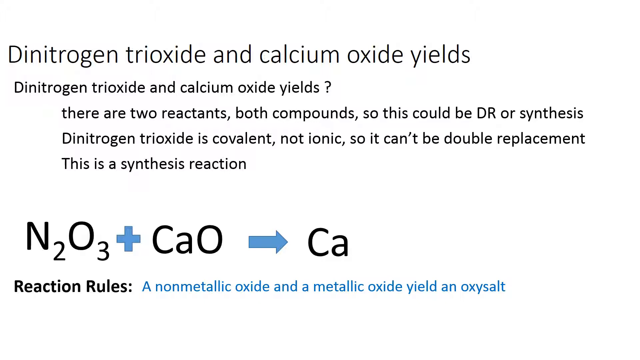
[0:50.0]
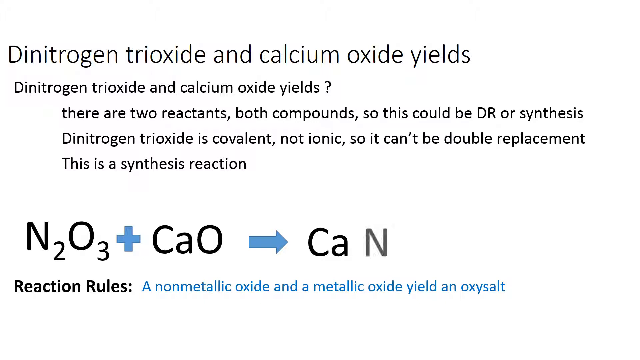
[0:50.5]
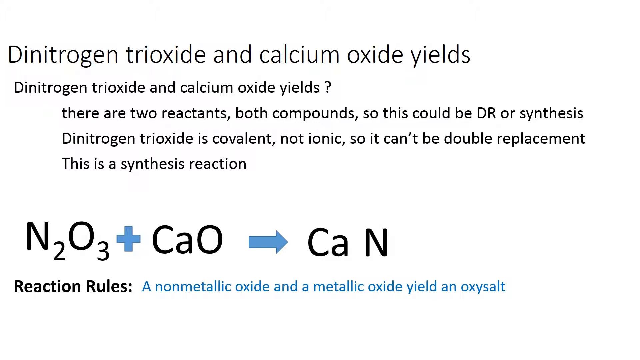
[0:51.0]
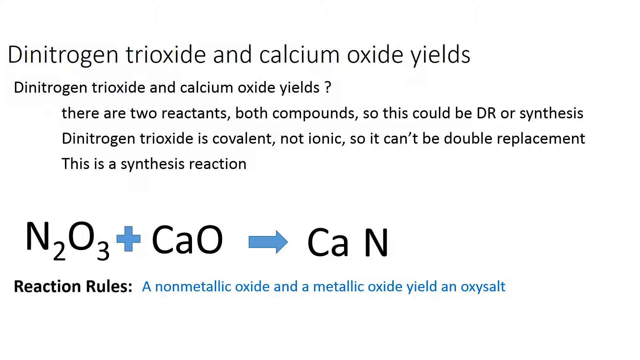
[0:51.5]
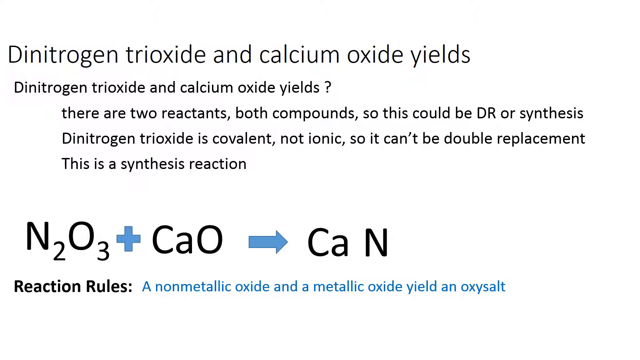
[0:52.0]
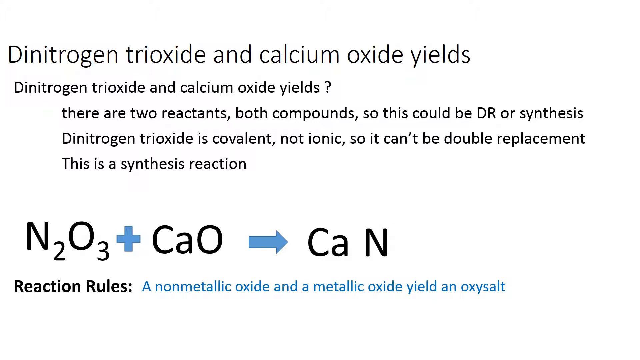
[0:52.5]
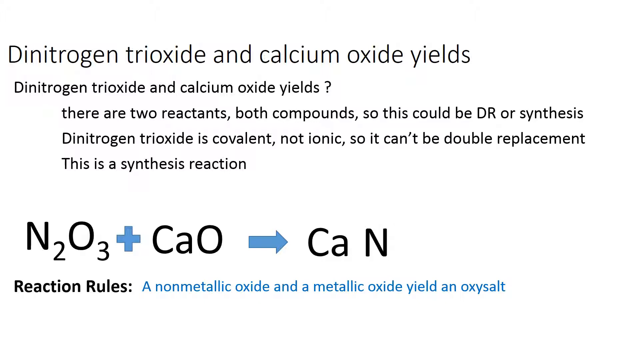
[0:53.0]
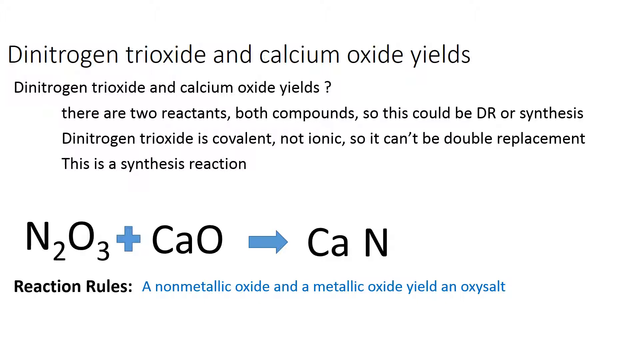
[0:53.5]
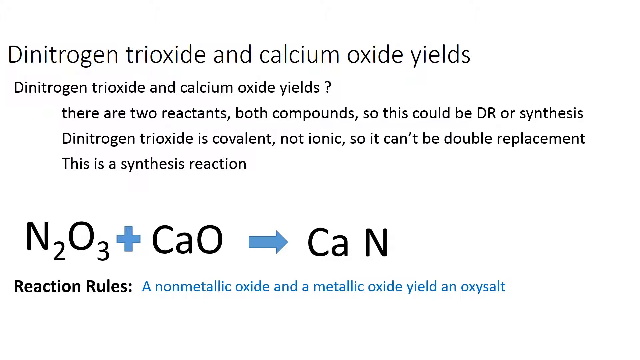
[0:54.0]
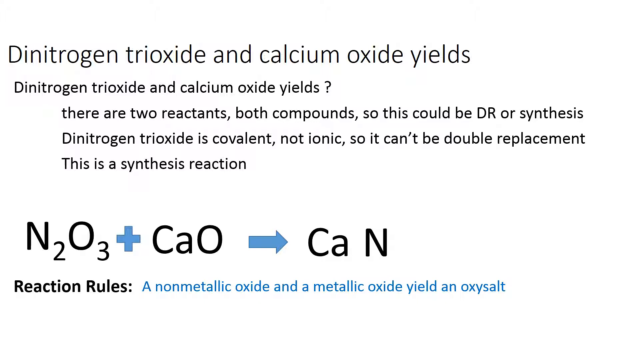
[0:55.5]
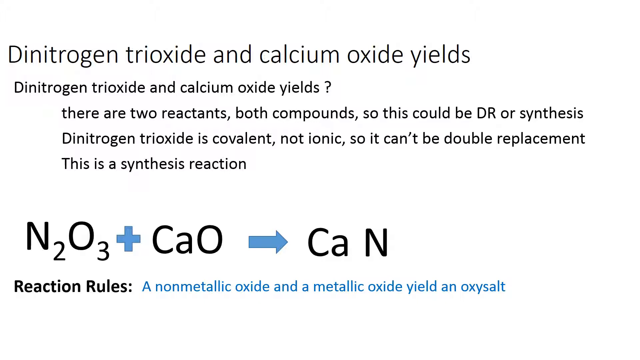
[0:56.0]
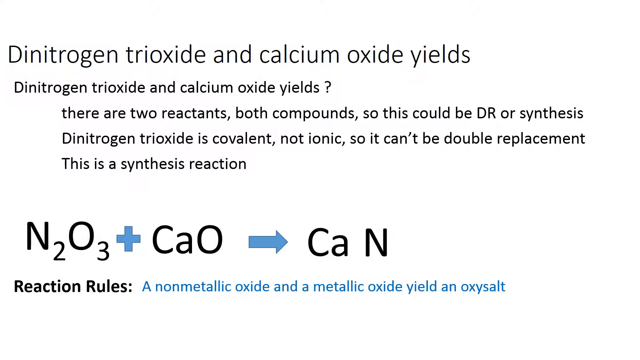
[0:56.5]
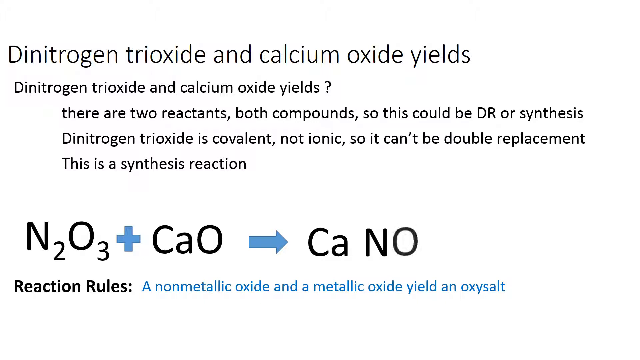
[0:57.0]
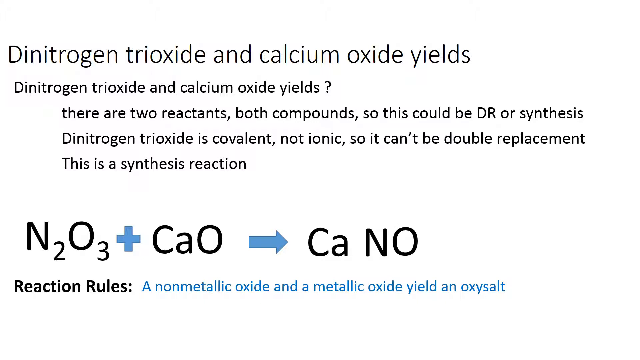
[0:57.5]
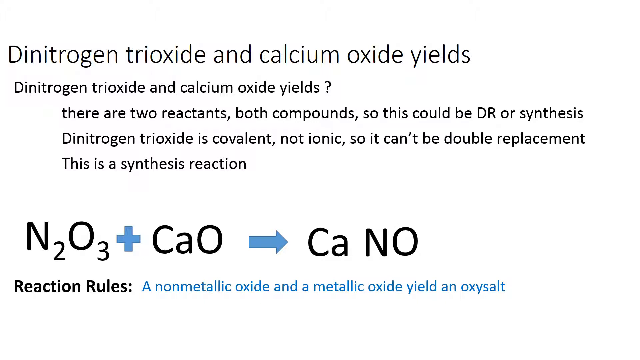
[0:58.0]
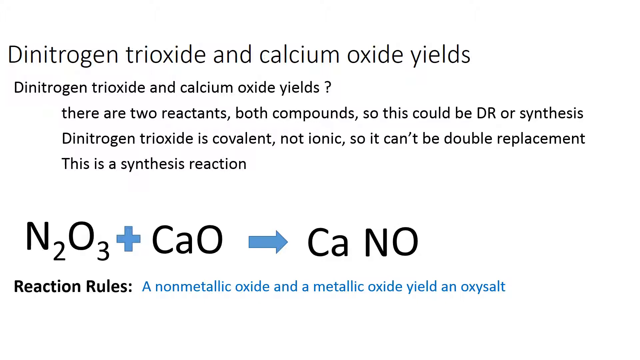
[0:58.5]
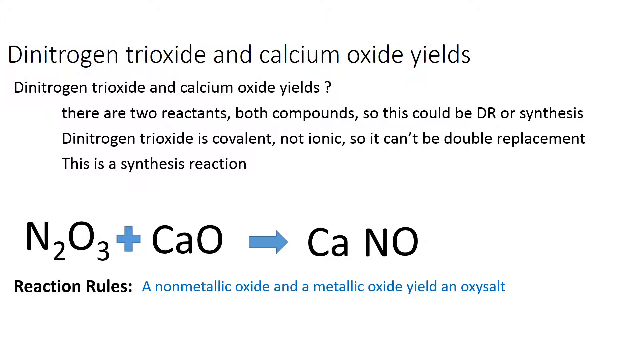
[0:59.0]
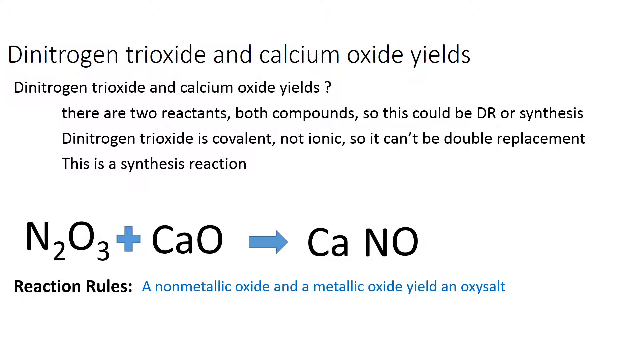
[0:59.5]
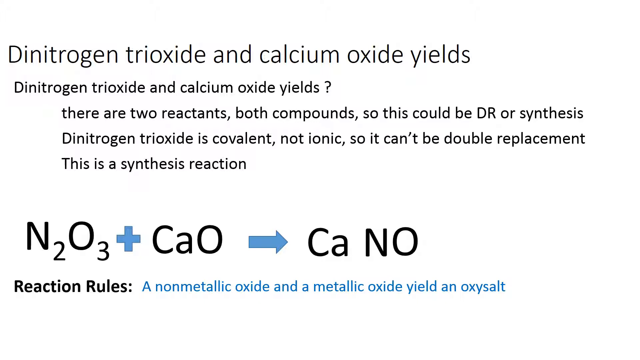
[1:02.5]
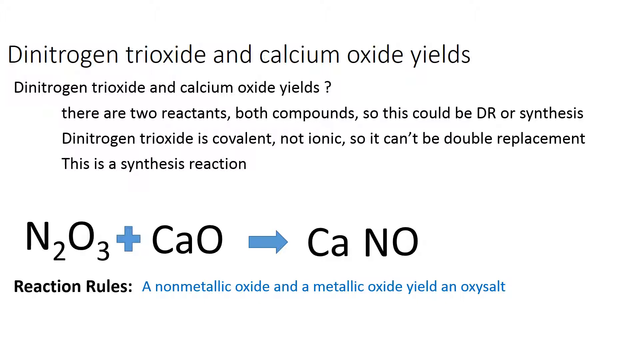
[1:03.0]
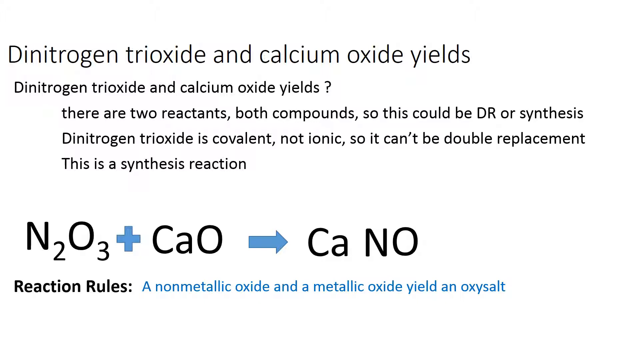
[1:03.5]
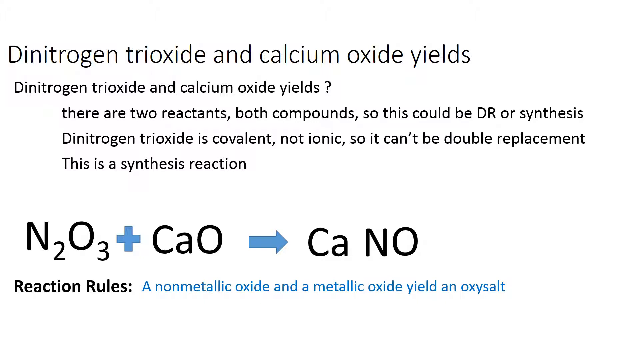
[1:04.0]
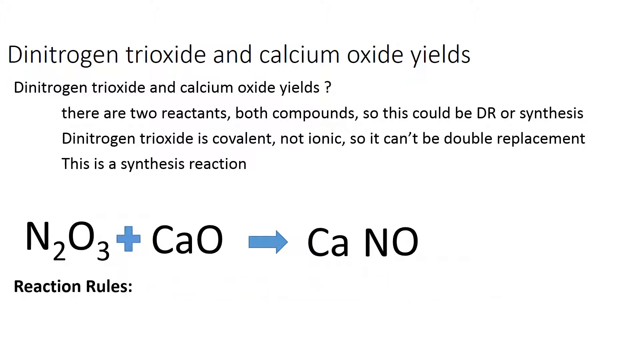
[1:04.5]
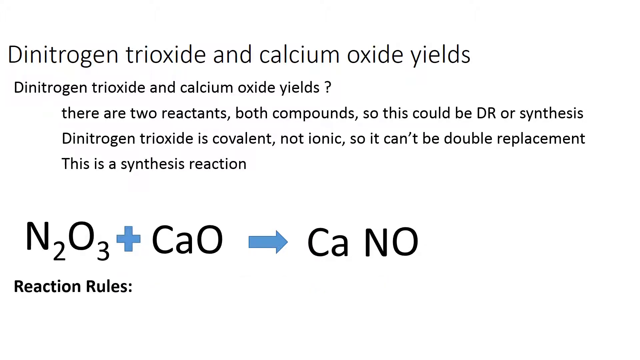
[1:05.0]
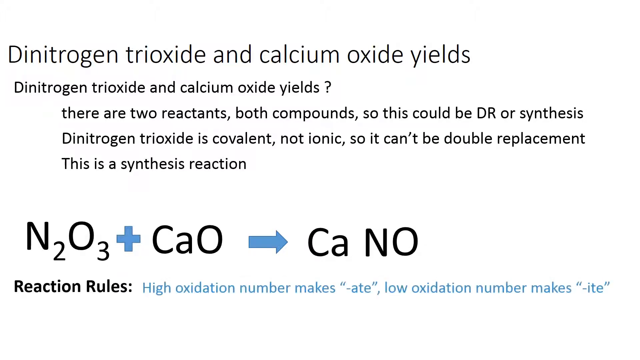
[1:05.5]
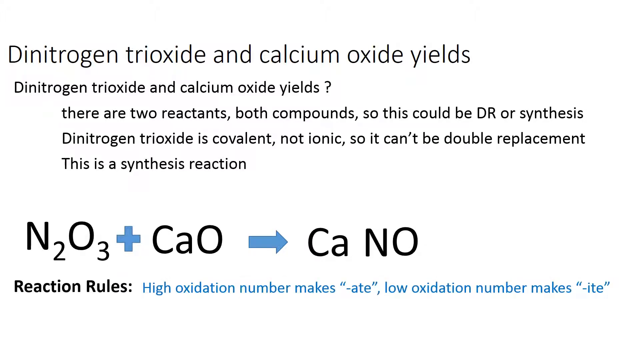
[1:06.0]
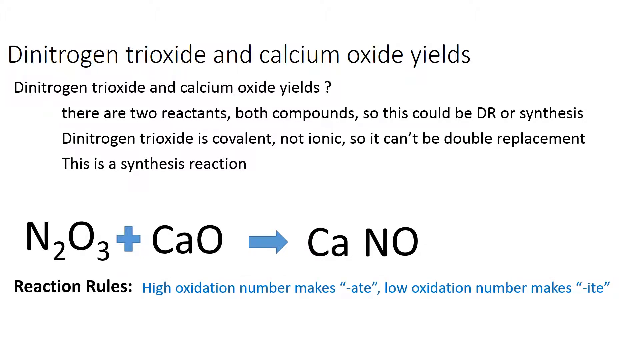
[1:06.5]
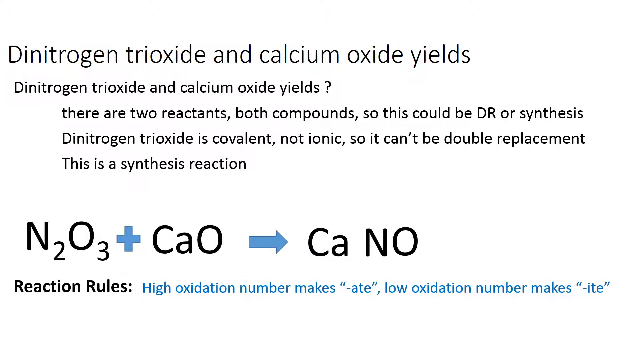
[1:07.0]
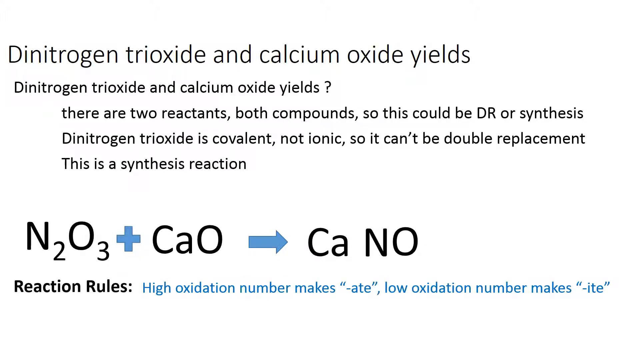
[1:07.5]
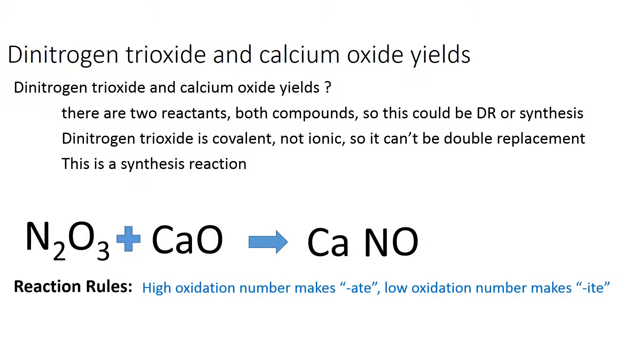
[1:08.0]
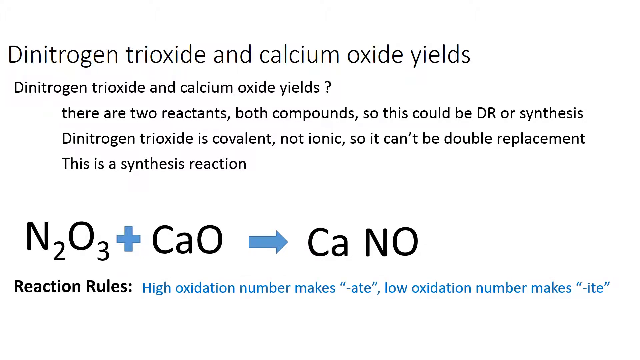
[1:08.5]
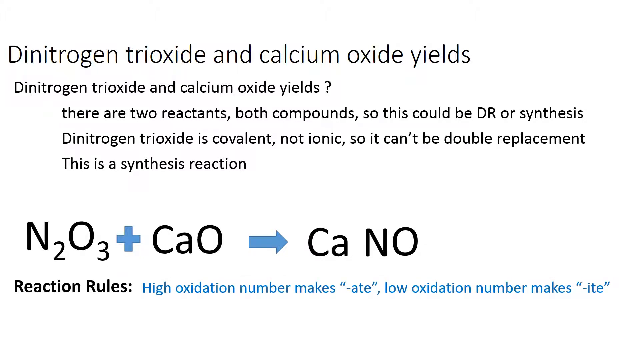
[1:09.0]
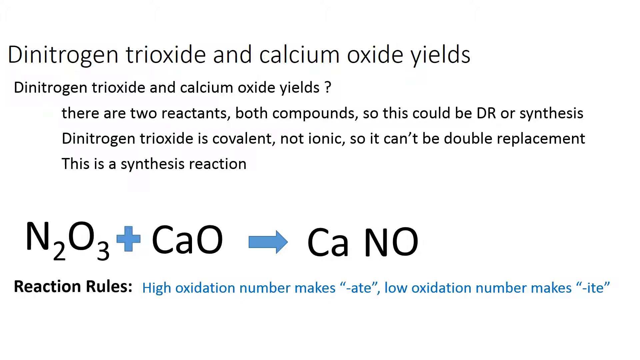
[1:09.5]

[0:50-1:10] On a white background, black text at the top says "Dinitrogen Trioxide and calcium oxide yields." Beneath it, smaller black text says "Dinitrogen trioxide and calcium oxide yields" with a ? to its right, followed by black lines saying "there are two reactants, both compounds, so this could be DR or synthesis," "Dinitrogen trioxide is covalent, not ionic, so it can't be double replacement," and "This is a synthesis reaction." Beneath that is larger black text "N2O3," a blue + mark, and black text "CaO," followed by a blue arrow and black text that says "Ca." Below is black text "Reaction Rules:" with blue text to its right saying "A nonmetallic oxide and a metallic oxide yield an oxysalt." A black N appears to the right of "Ca," and an O appears next to the N. The text to the right of "Reaction Rules:" disappears and is replaced by blue text that says "High oxidation number makes "-ate", low oxidation number makes "-ite"."